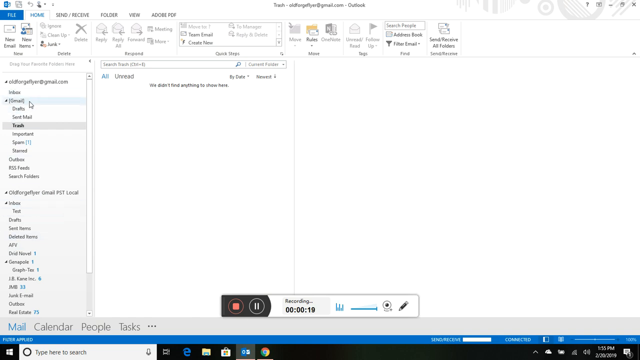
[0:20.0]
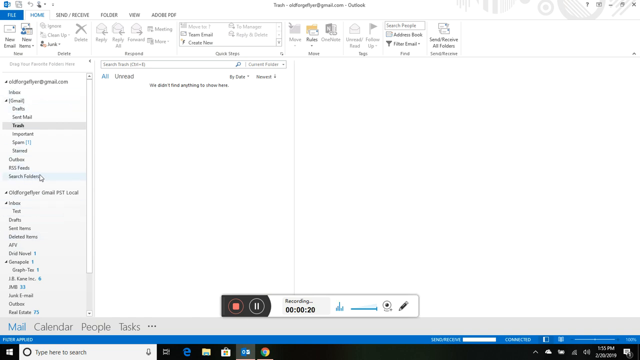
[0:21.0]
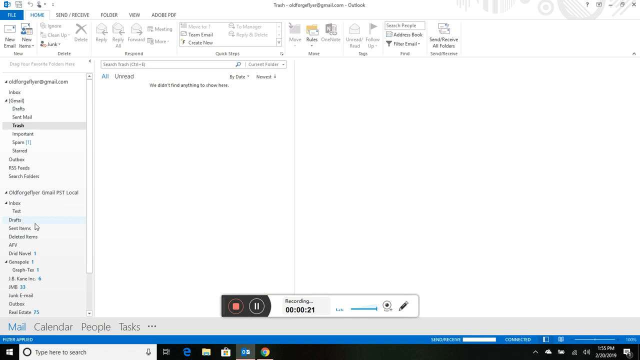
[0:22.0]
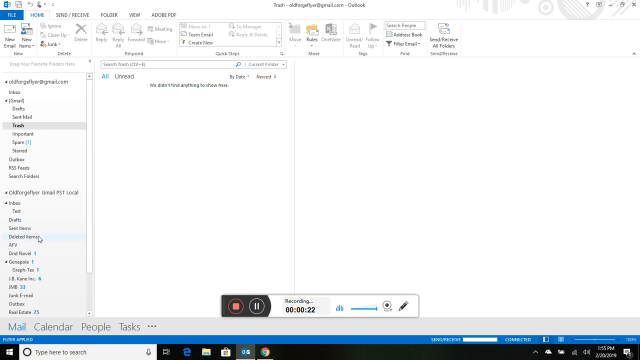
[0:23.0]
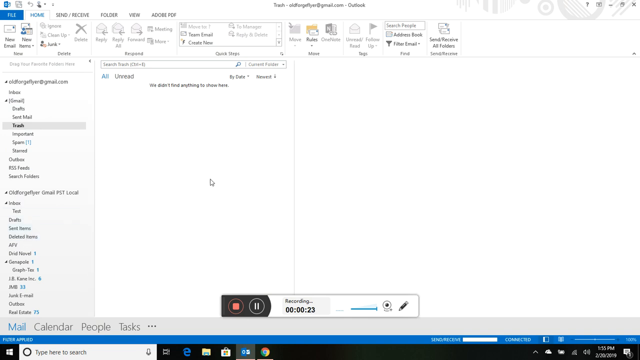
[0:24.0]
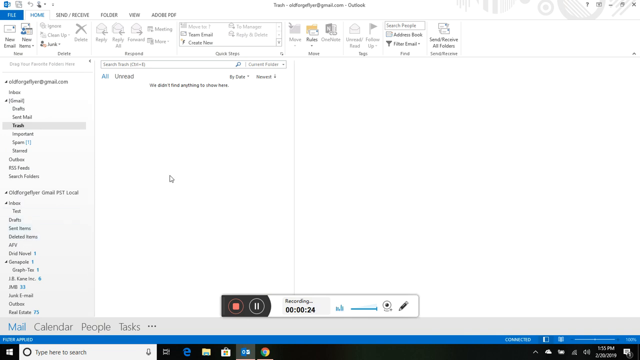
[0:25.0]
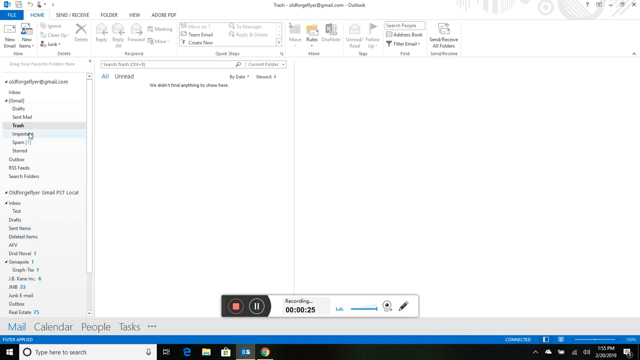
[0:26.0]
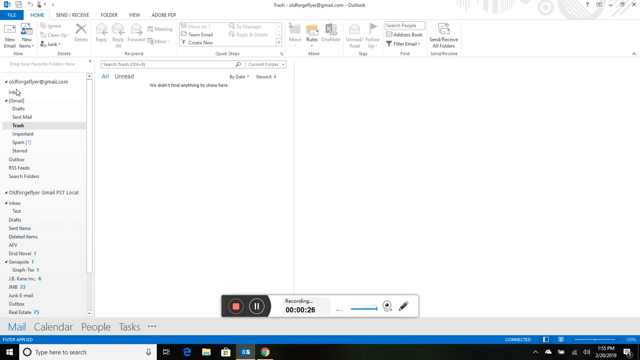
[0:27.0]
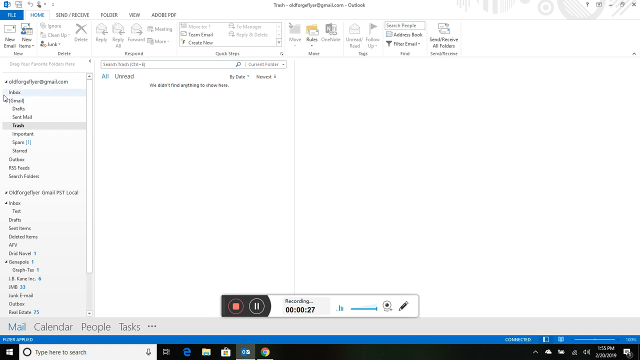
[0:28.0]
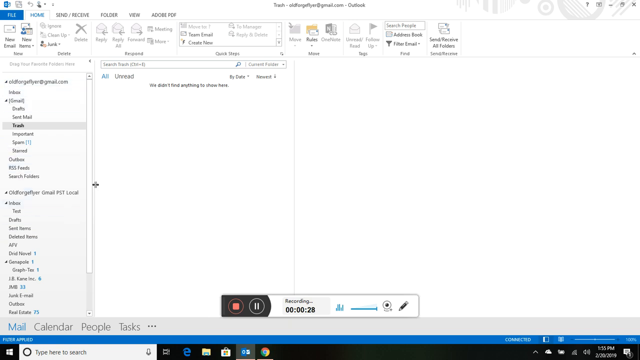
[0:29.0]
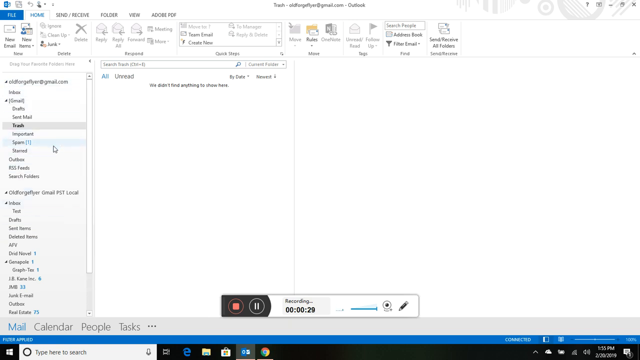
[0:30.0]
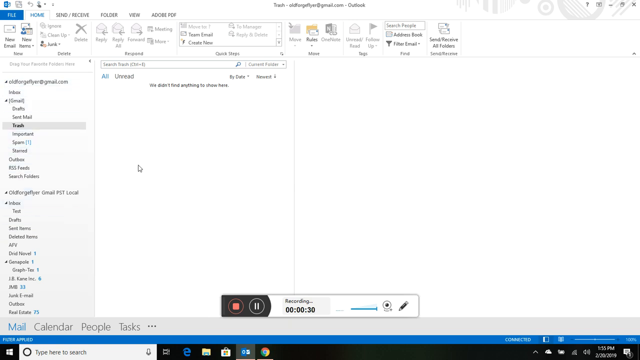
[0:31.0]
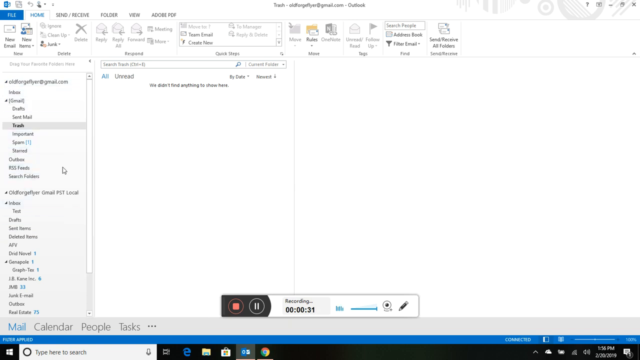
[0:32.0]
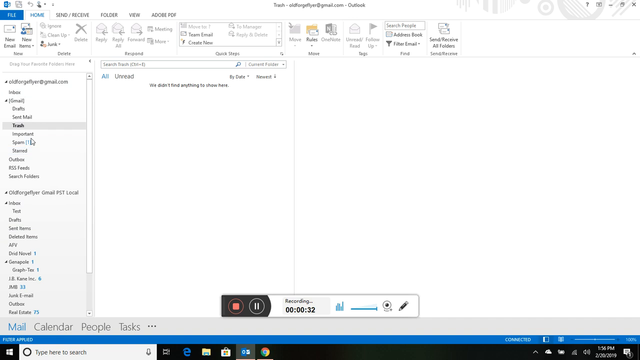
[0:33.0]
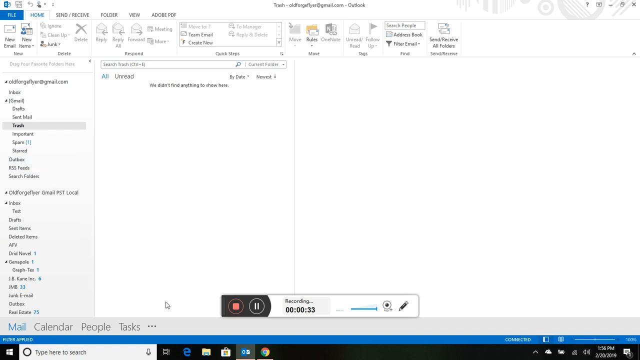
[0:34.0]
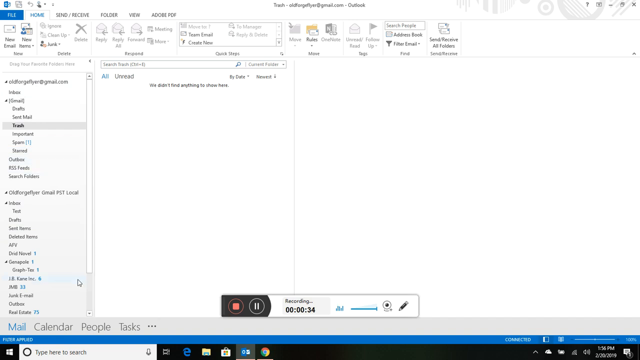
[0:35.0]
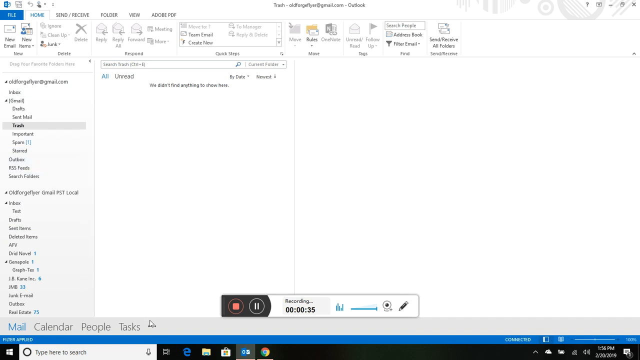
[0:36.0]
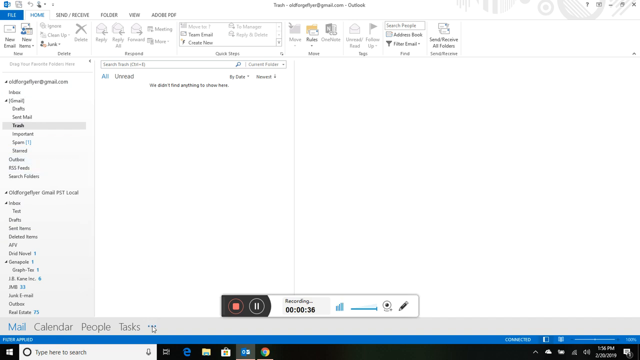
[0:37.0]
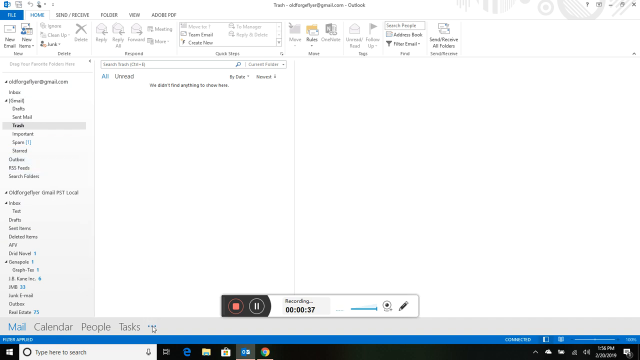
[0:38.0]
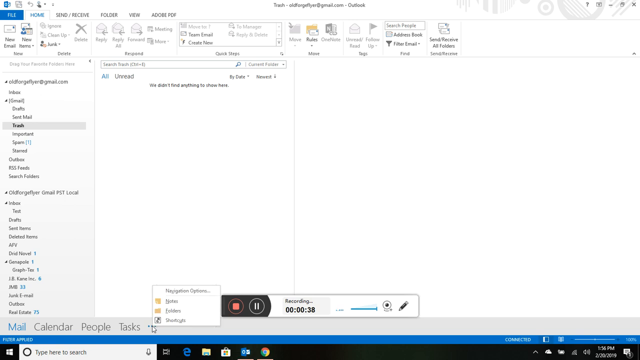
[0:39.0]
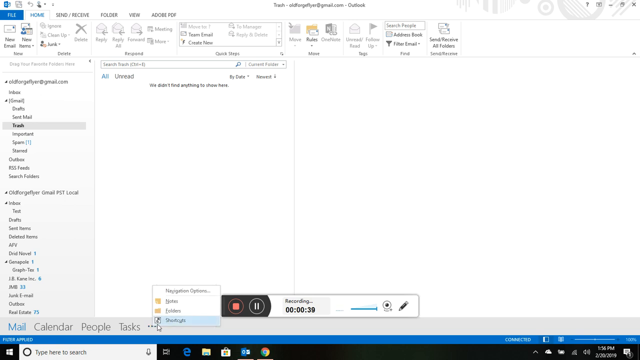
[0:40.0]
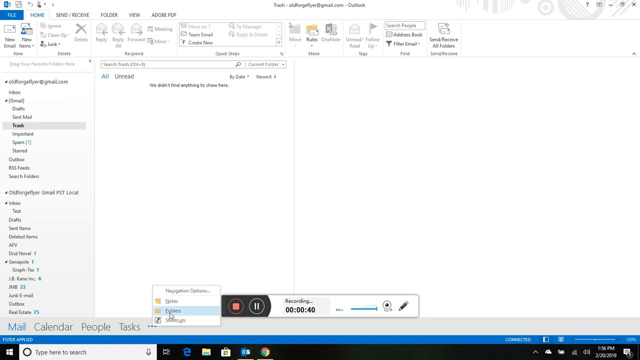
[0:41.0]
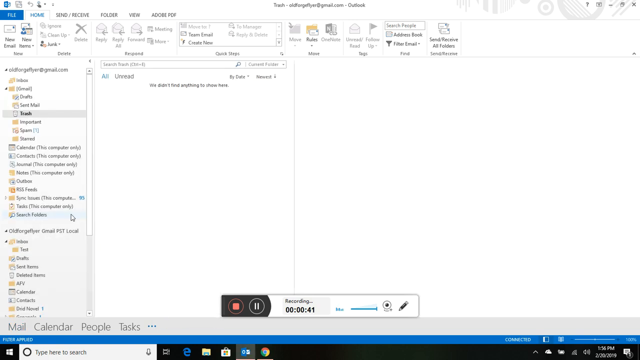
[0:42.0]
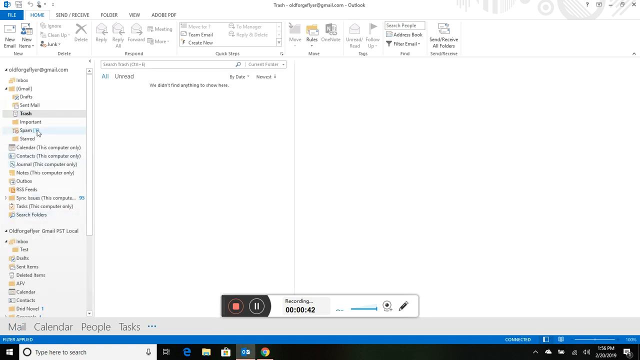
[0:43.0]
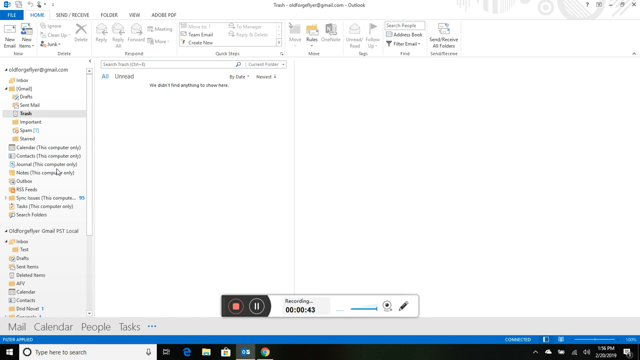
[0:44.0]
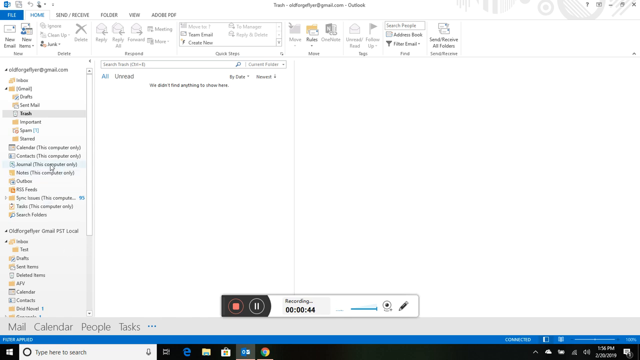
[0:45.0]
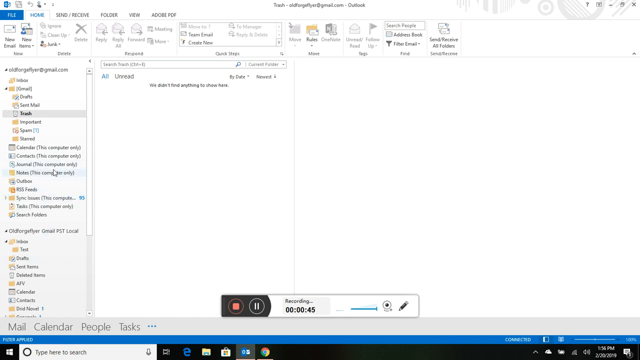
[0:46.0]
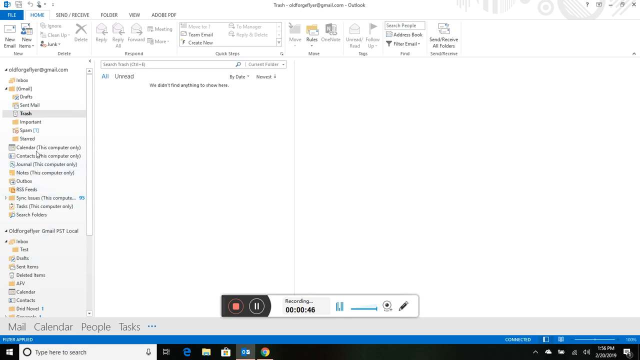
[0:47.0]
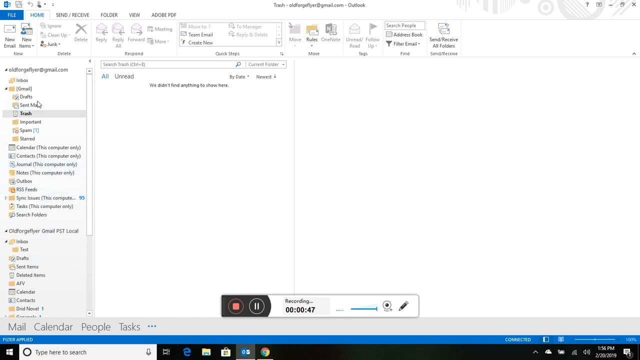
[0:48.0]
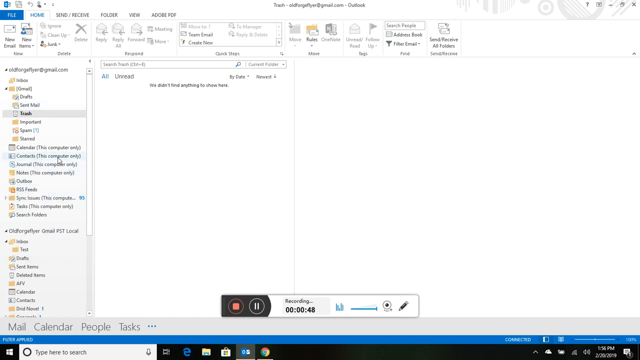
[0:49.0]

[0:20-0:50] A man keeps moving the mouse, navigating around the screen; it is unclear what he is trying to open or close.